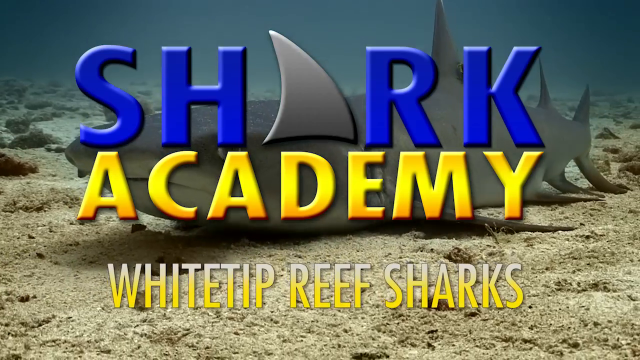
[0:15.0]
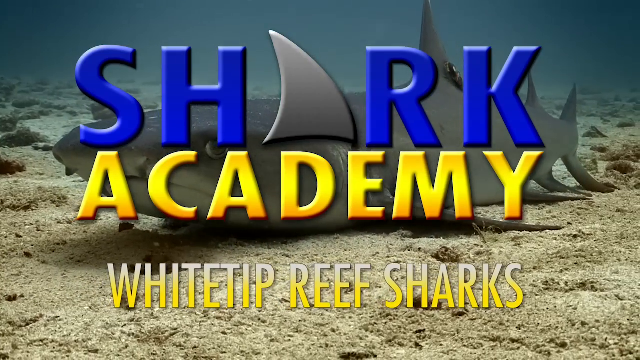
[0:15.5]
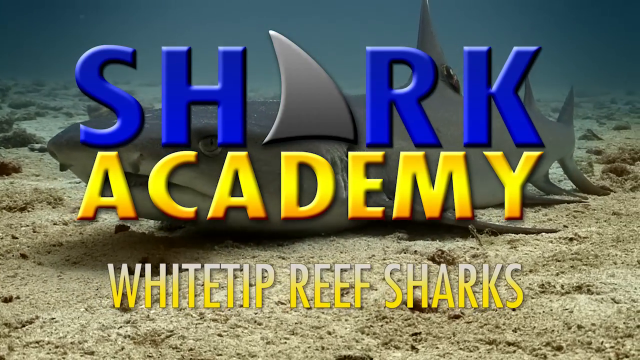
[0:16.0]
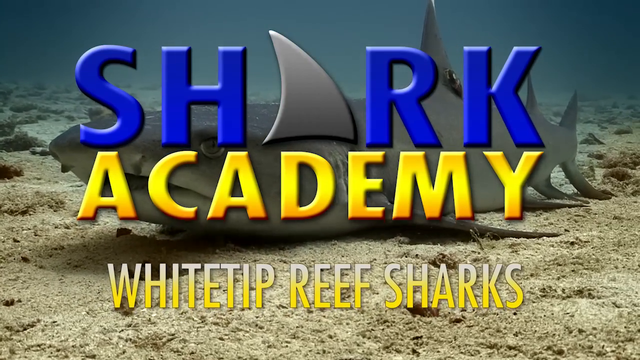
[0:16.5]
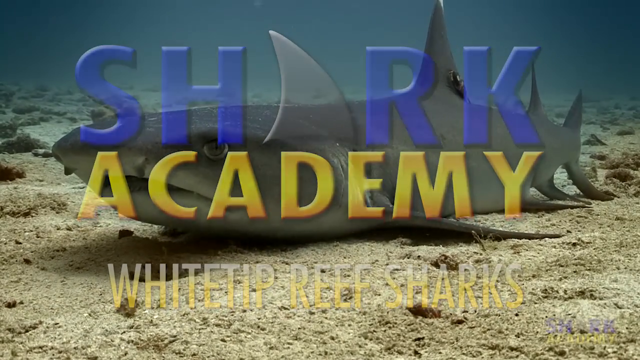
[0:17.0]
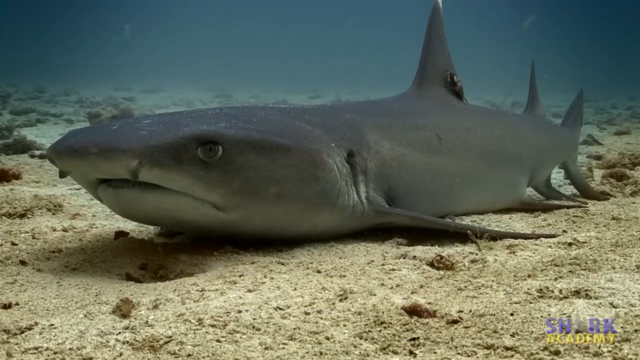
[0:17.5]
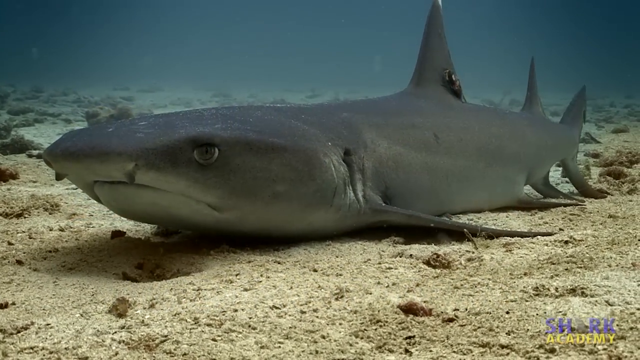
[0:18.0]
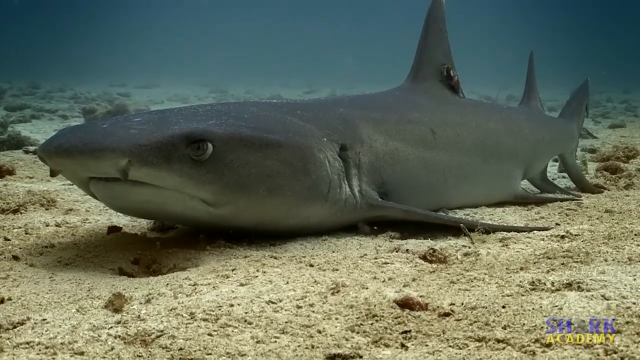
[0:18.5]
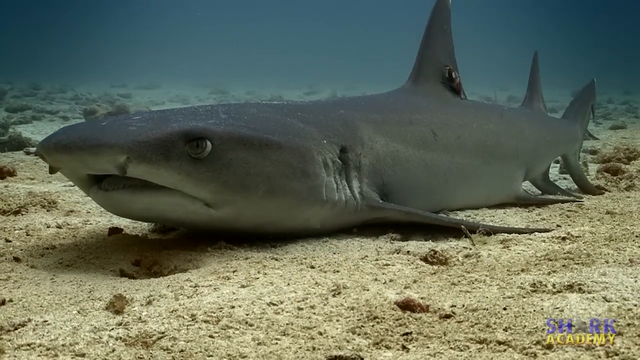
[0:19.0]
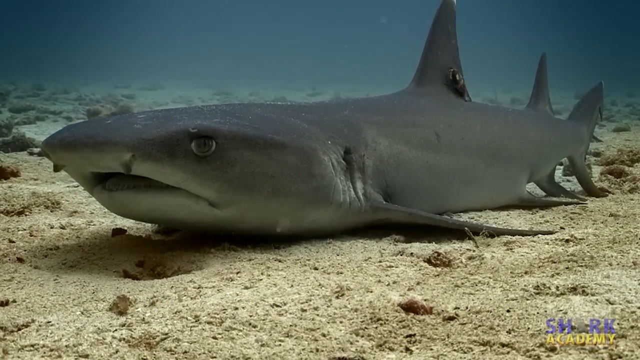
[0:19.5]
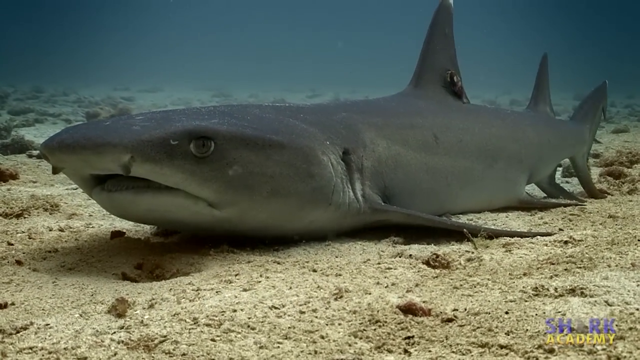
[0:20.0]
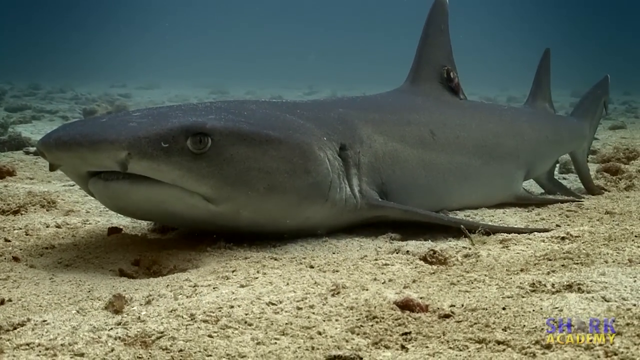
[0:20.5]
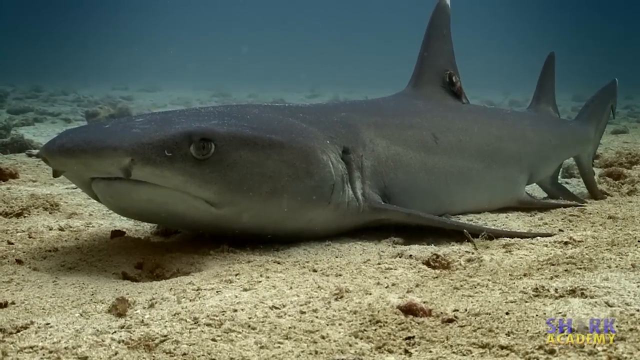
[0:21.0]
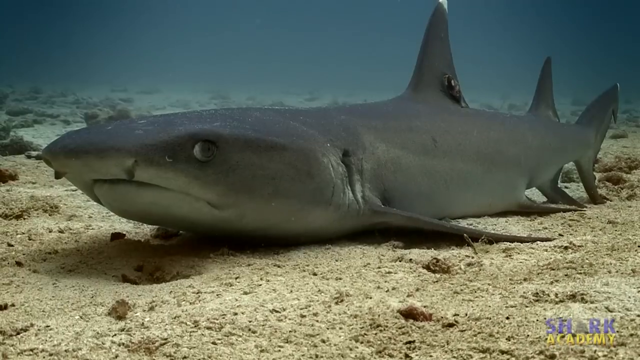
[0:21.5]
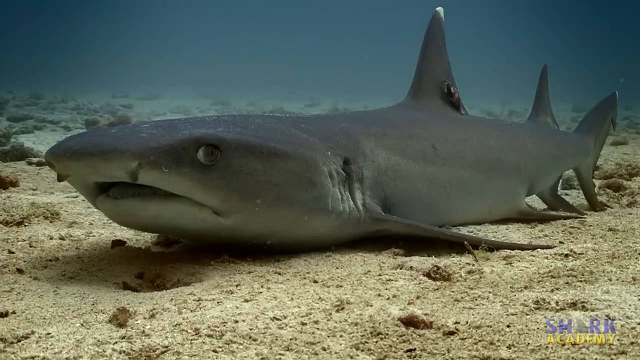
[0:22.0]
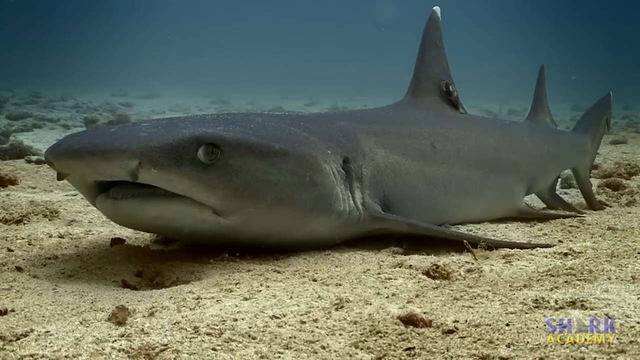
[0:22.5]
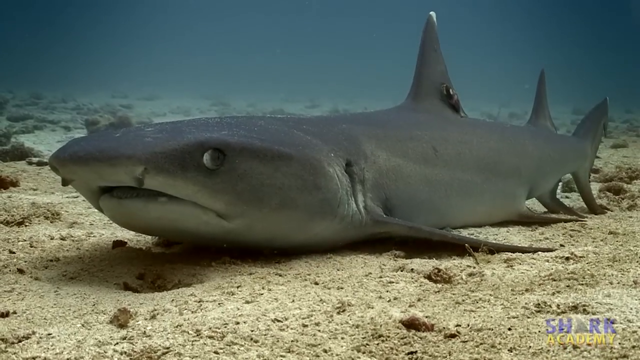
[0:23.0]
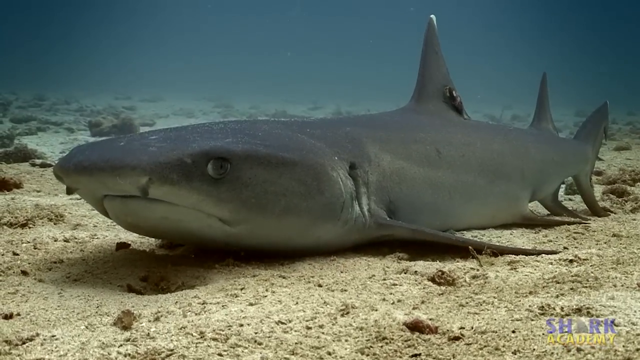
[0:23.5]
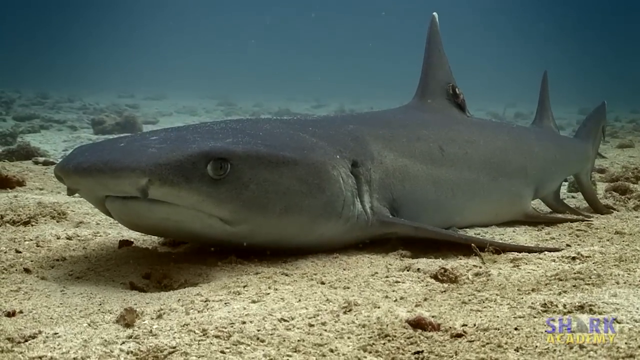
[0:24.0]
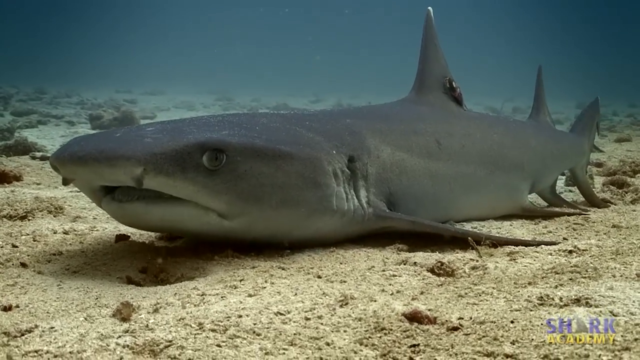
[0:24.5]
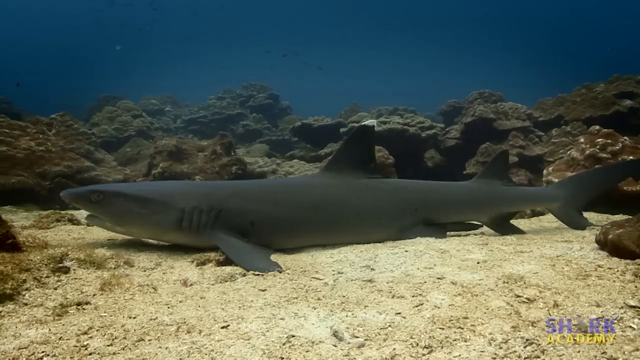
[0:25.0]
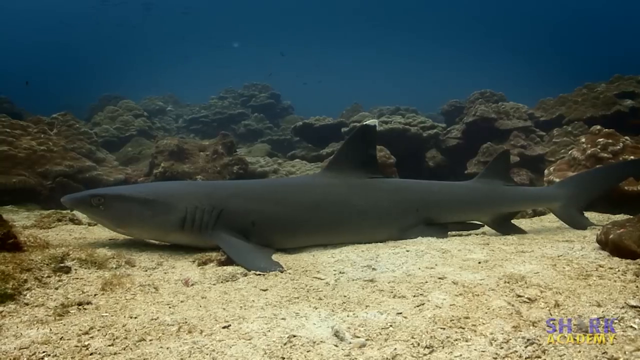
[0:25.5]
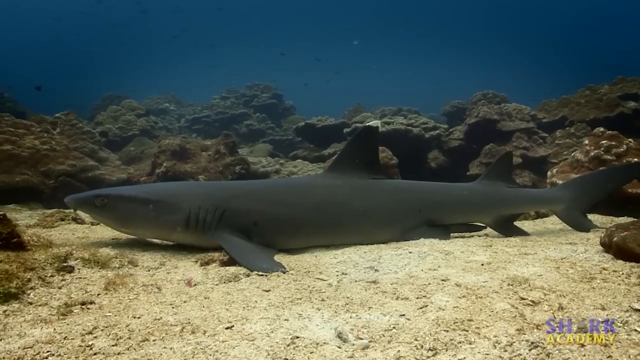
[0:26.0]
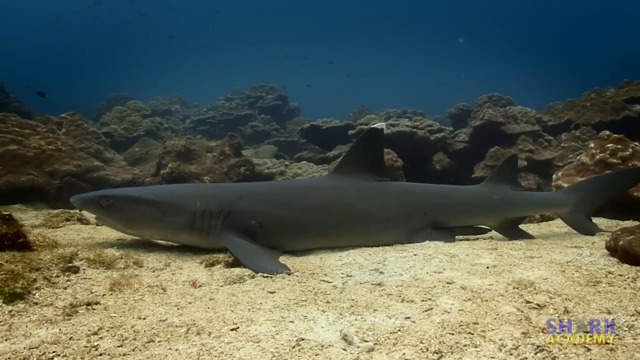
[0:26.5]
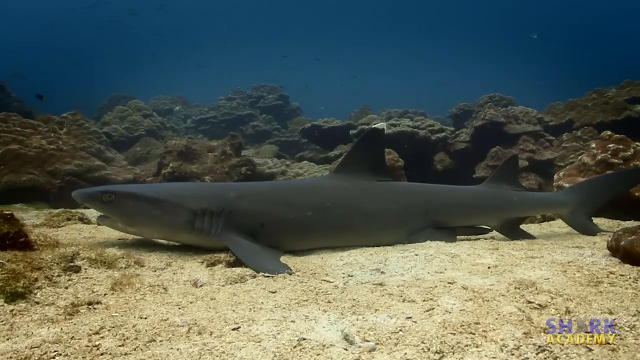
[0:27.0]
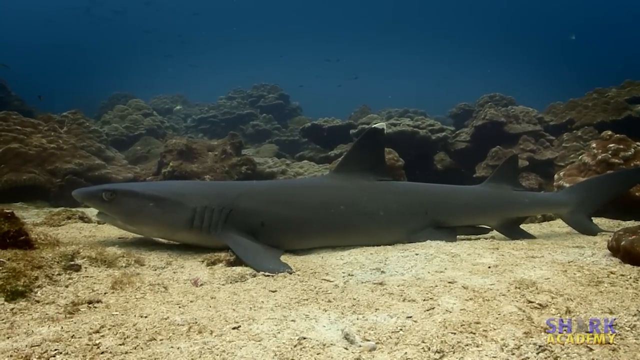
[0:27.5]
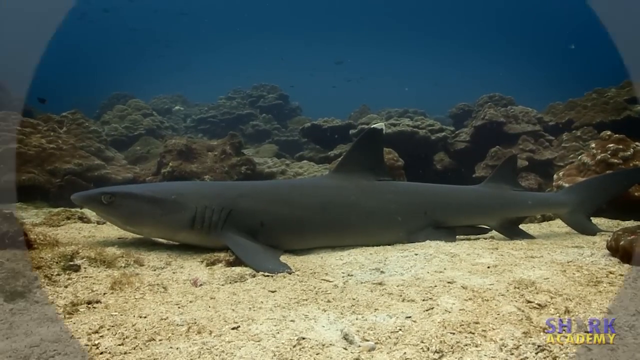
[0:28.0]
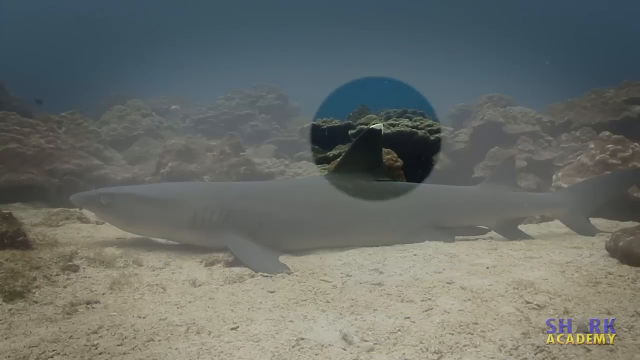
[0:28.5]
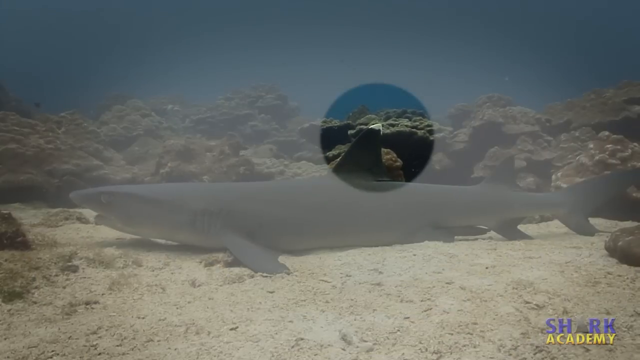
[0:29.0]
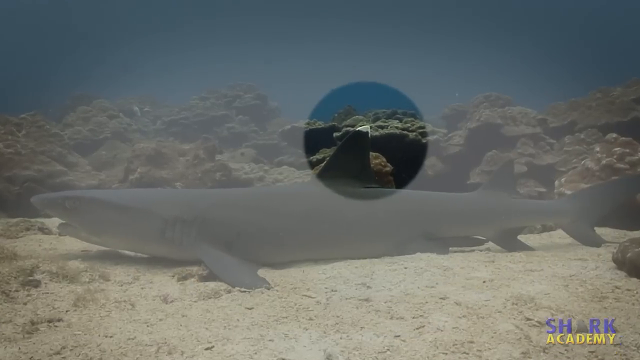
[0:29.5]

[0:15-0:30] A banner reading "Shark Academy Whitetip Reef Sharks" is overlaid on an image of a shark. The shark is long and dark gray and lies on its belly on a sea bottom covered in beige sand. Its mouth keeps opening and closing and its eyes look to the side; it is not moving, just lying on the sand. The image cuts to a side view of the shark with rocks behind it on the seabed. A circle then appears on the screen and zooms into its dorsal fin, everything else in the image fades out, and the focus is on the dorsal fin.